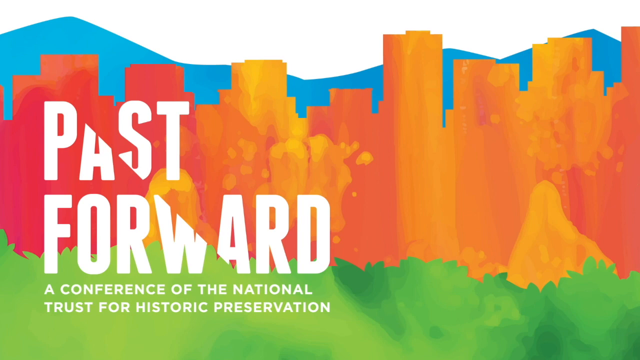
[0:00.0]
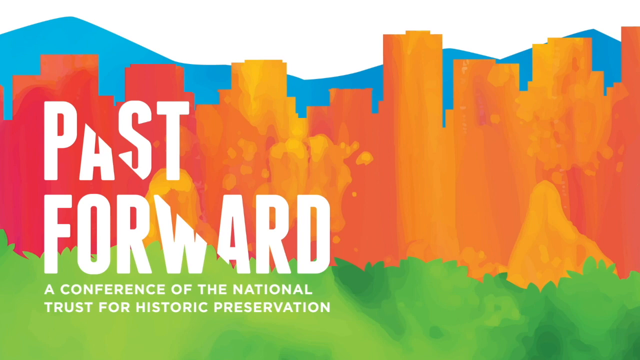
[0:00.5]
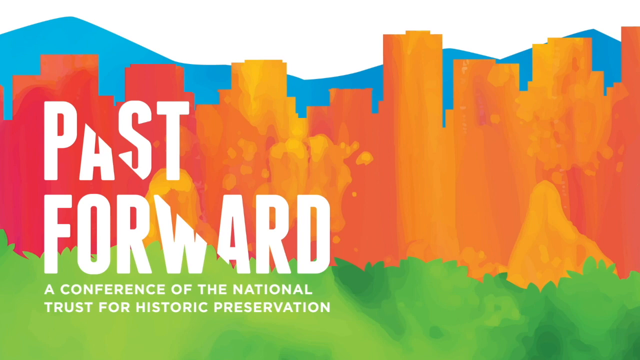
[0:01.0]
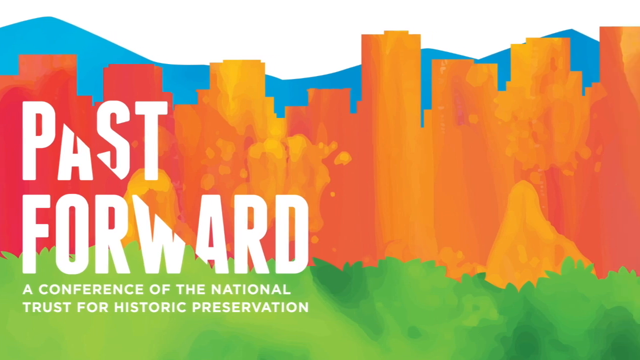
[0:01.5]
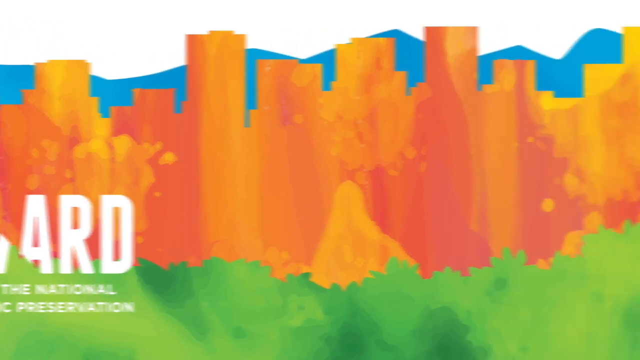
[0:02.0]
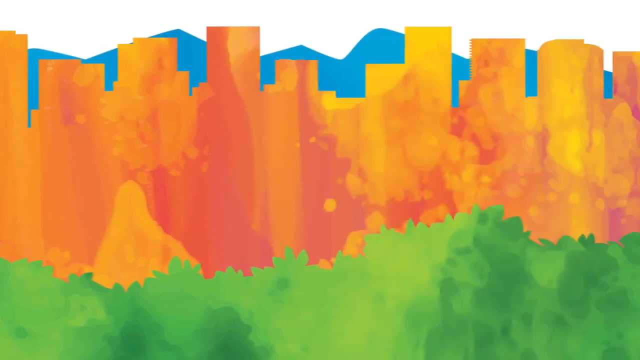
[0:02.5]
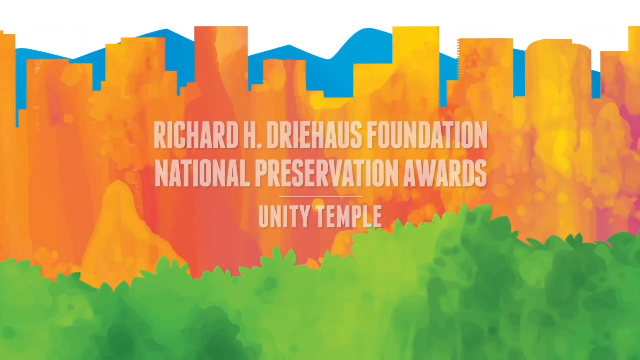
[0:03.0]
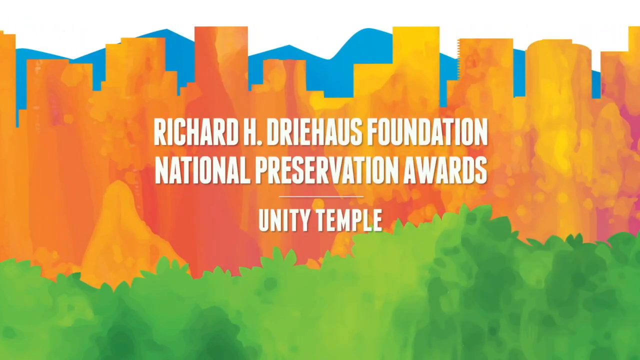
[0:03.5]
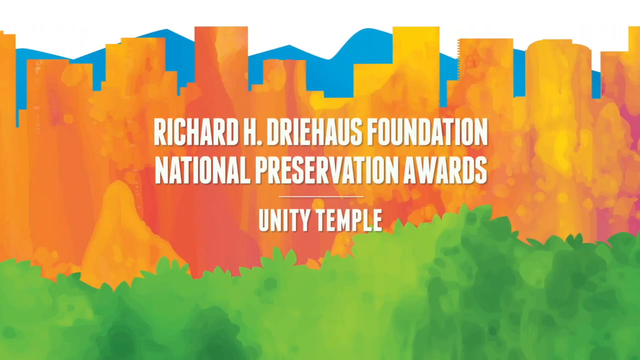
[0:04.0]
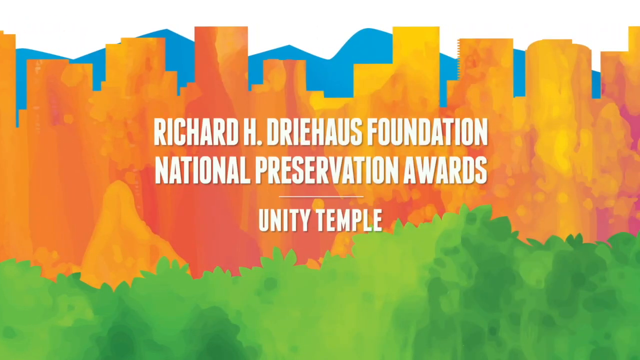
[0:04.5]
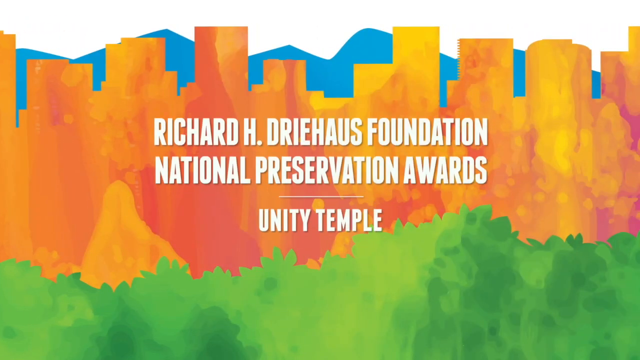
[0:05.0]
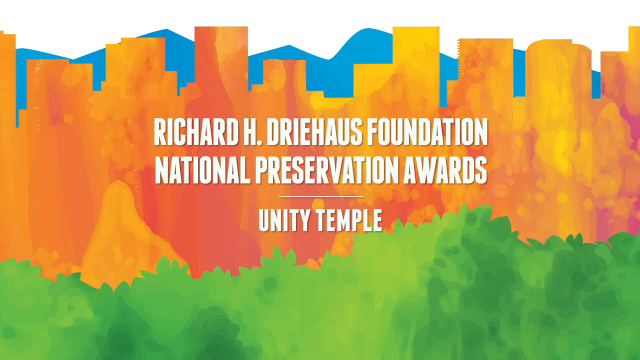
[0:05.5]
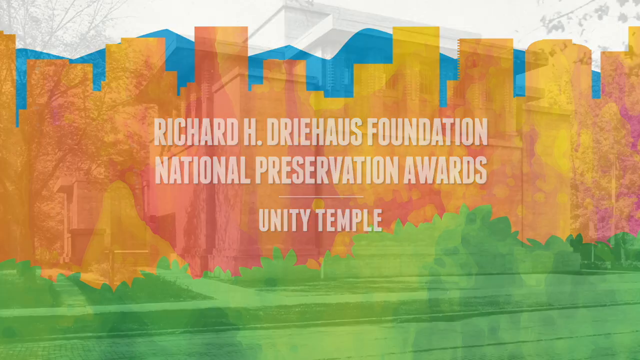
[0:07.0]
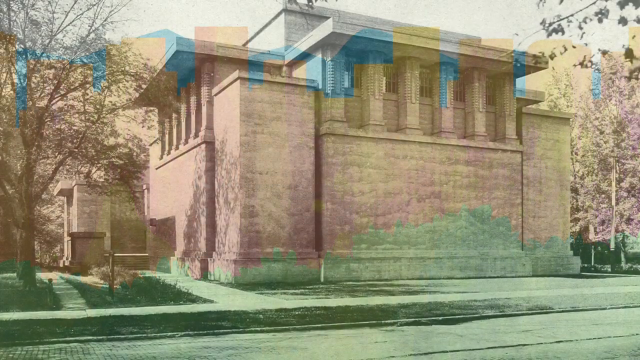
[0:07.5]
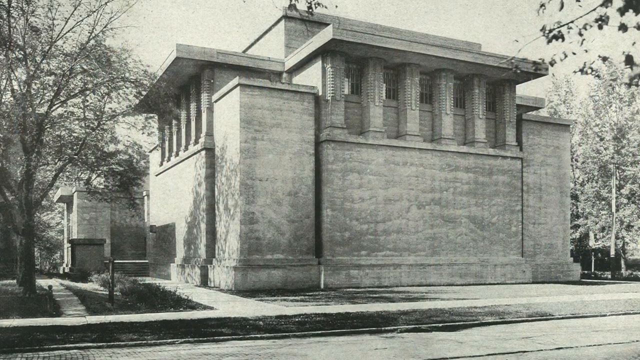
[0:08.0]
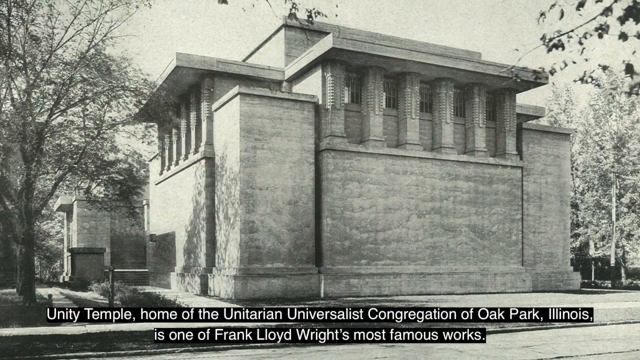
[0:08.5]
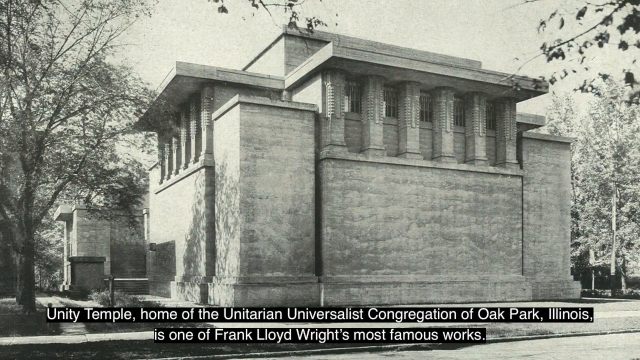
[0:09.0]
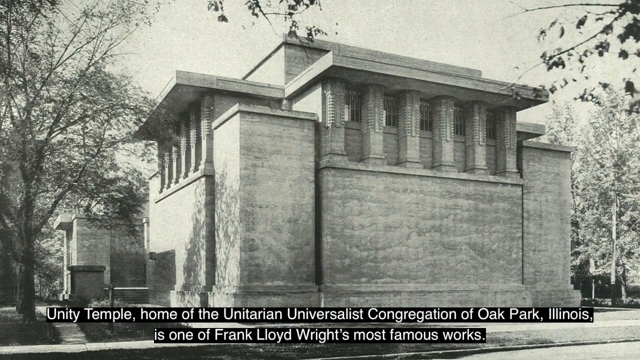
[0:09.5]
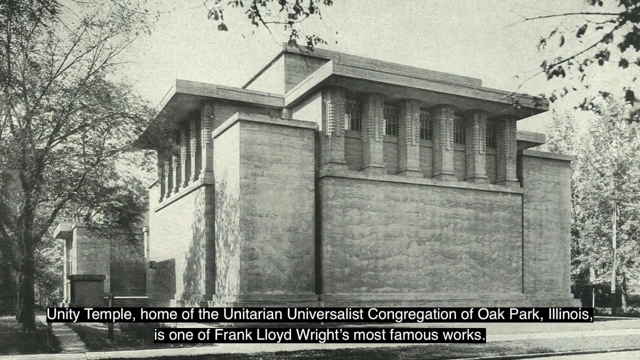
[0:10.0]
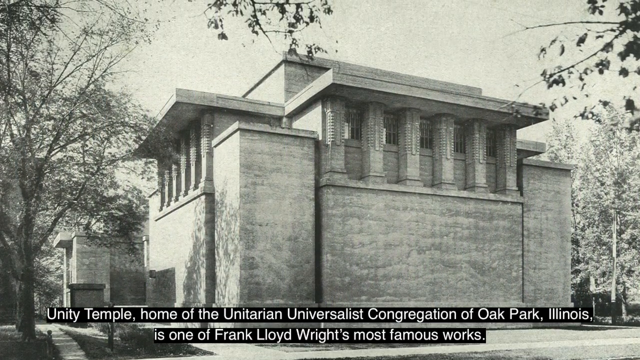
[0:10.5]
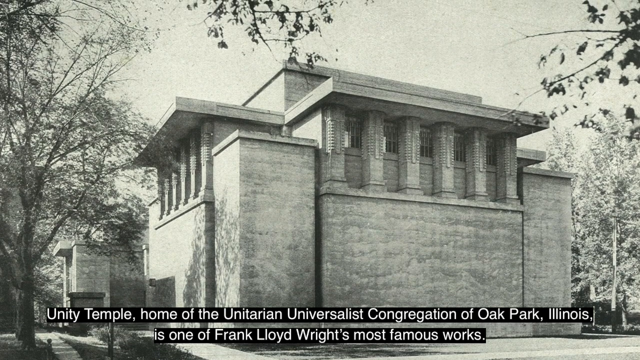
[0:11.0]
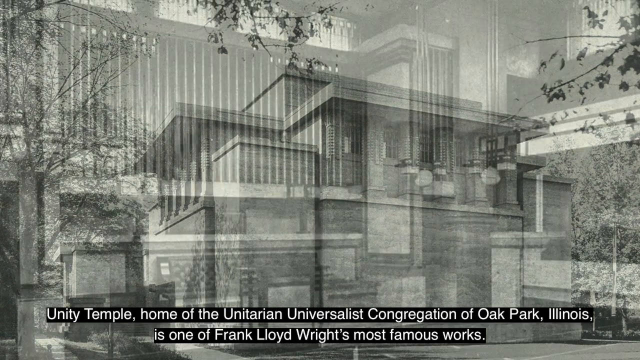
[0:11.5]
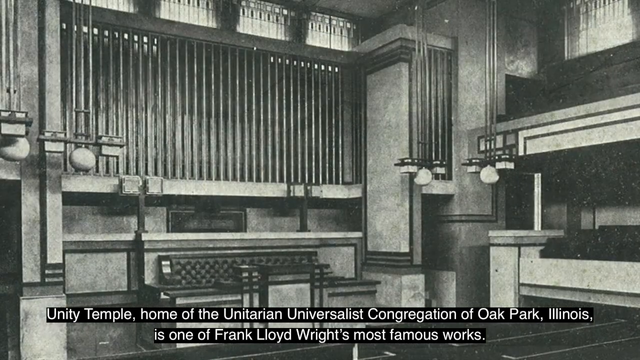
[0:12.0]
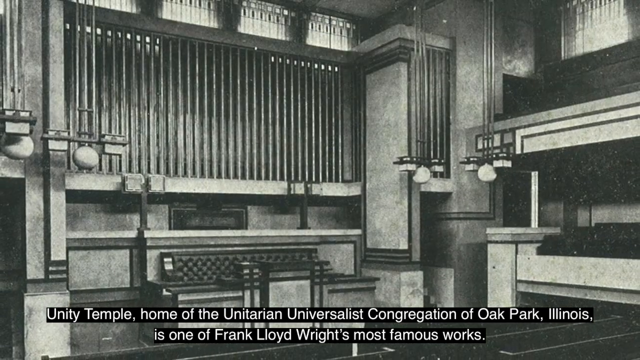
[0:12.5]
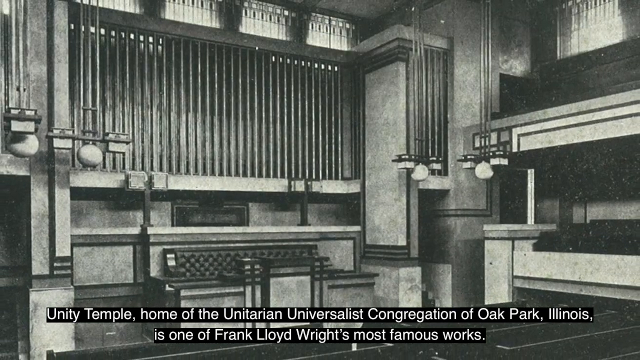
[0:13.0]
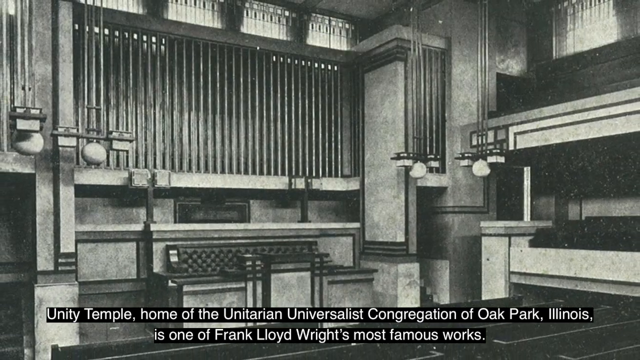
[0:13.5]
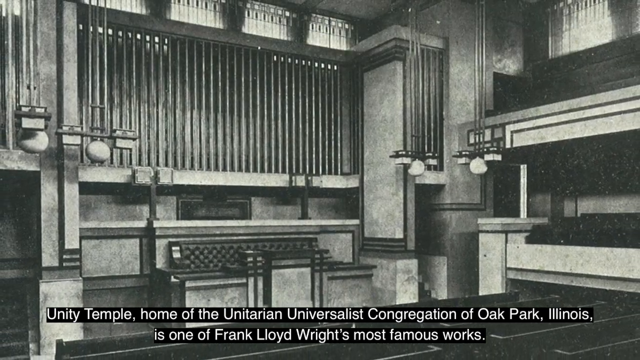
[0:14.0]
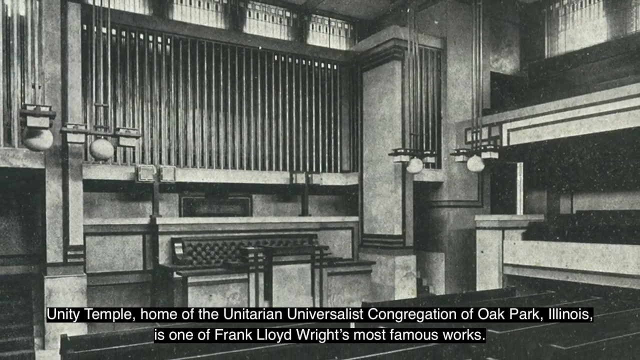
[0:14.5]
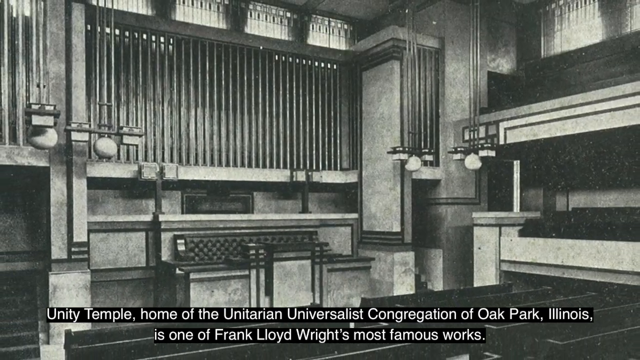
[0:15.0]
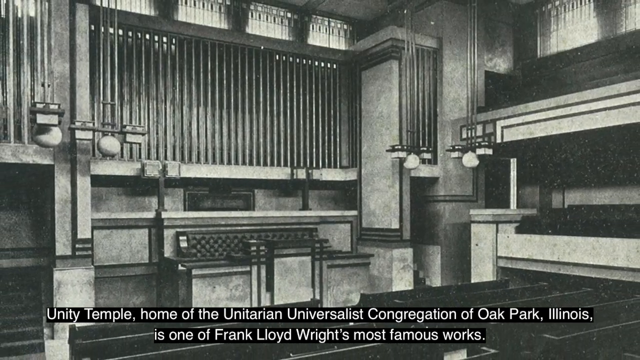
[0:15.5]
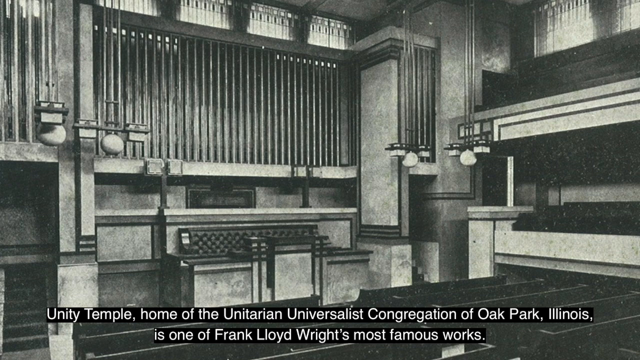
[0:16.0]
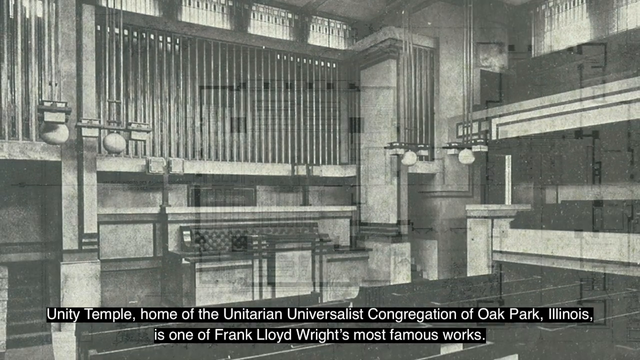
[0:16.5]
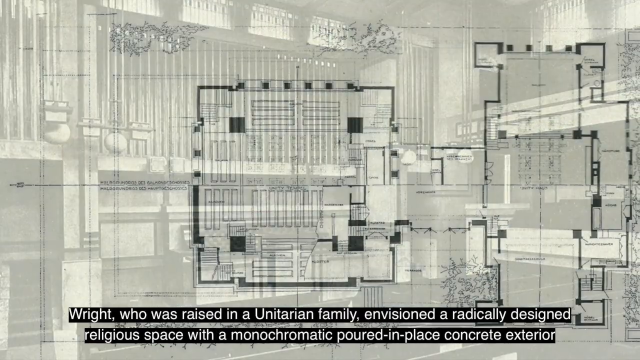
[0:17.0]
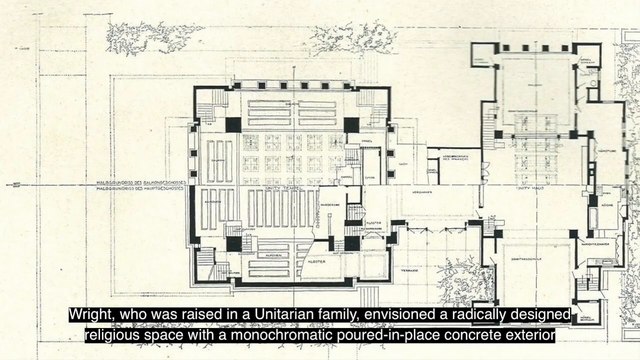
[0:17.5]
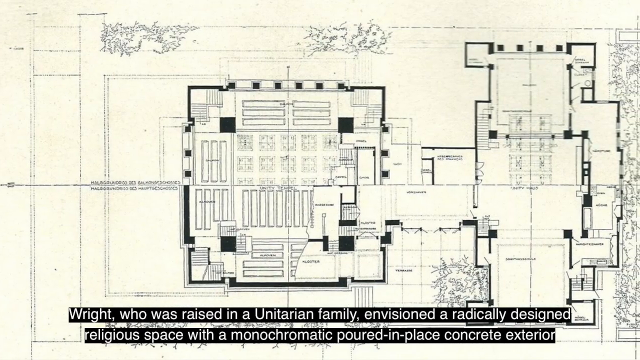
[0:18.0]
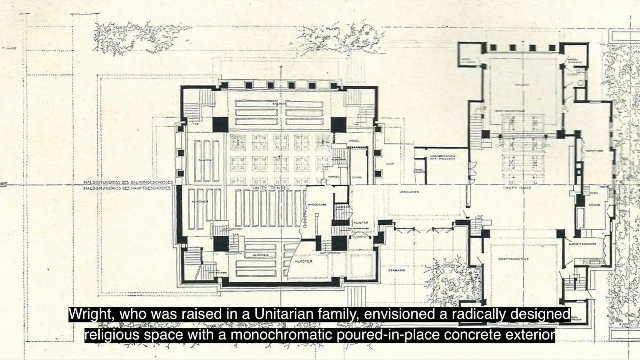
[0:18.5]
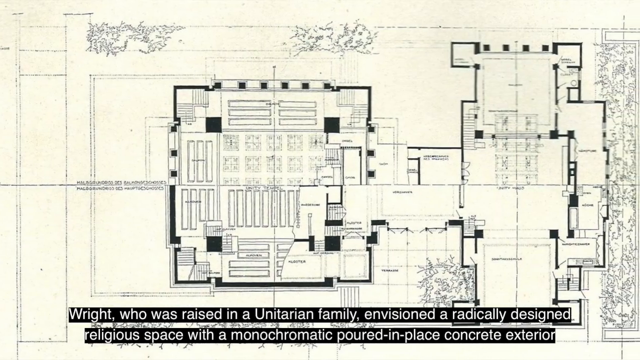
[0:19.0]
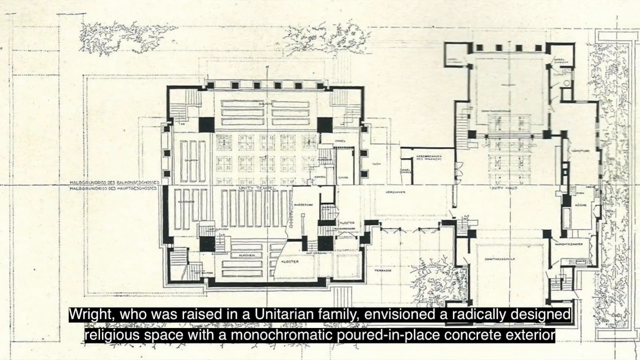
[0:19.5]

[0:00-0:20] The video opens with a graphic in bold colors. The medium blue background indicates a mountain range, and in the center are orange and deeper orange buildings, indicated by their rectangular shapes. In the front is a pretty green color that is the ground. The graphic is labeled "Past Forward, a conference of the National Trust for Historic Preservation." The camera moves from right to left. The screen then says "the Richard H. Dry House Foundation, National Preservation Awards, Unity Temple." The screen fades into an image of a stone temple, seen from different viewpoints, first from the outside and then in an inside shot. The caption underneath reads "Unity Temple, home of the Unitarian Universalist Congregation of Oak Park Illinois, is one of Frank Lloyd Wright's most famous works." The next image shows architectural plans with the caption "Wright, who was raised in a Unitarian family, envisioned a radically designed religious space with a monochromatic poured-in-place concrete exterior."